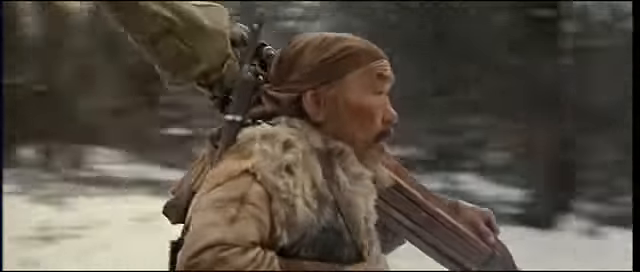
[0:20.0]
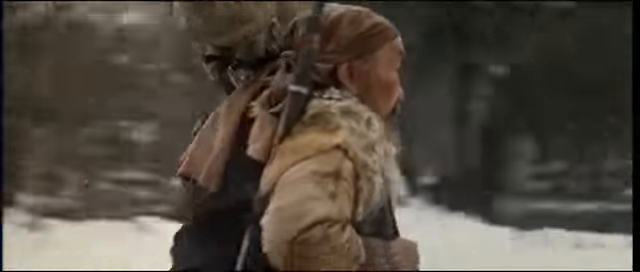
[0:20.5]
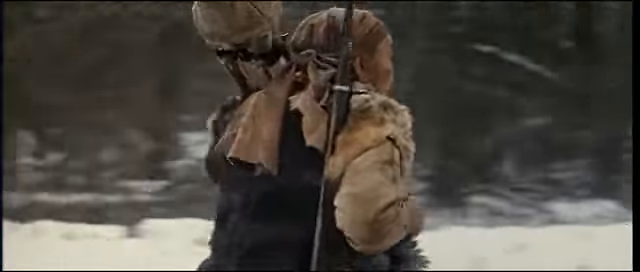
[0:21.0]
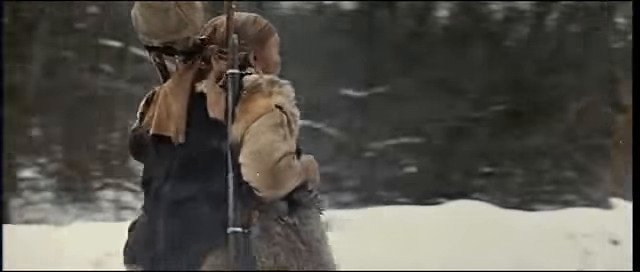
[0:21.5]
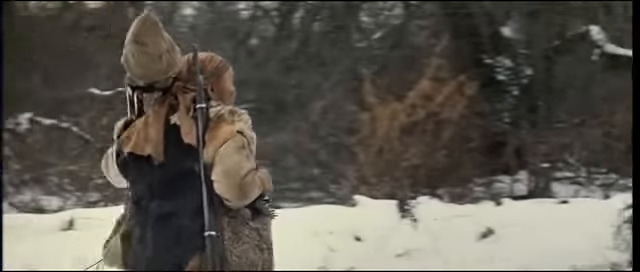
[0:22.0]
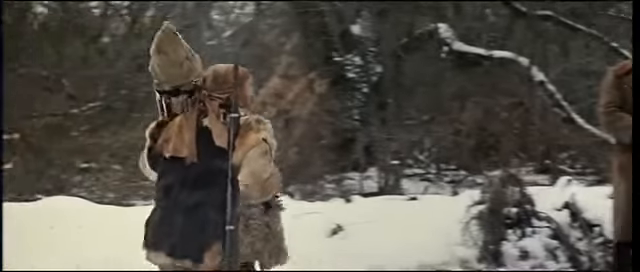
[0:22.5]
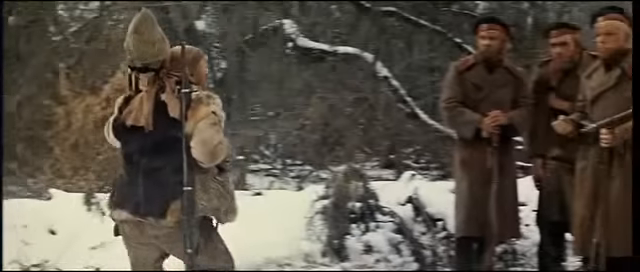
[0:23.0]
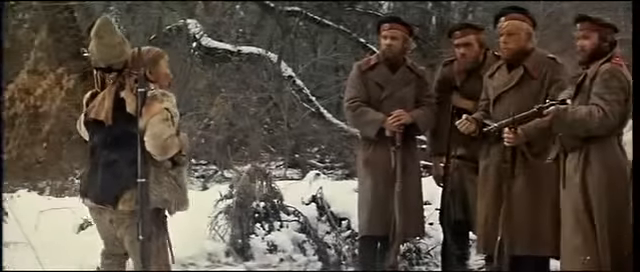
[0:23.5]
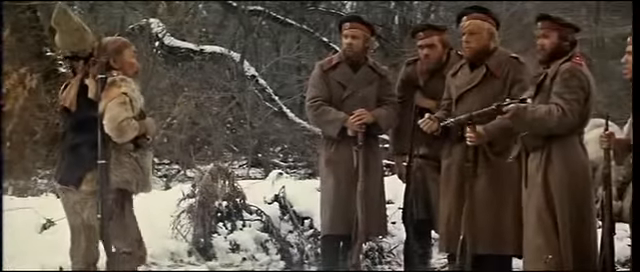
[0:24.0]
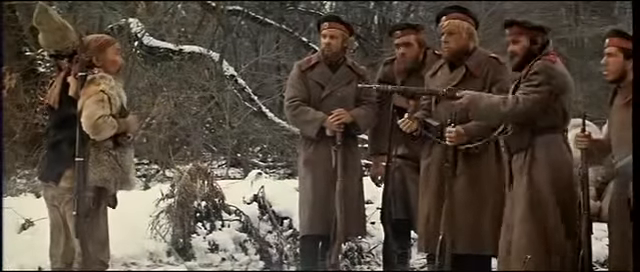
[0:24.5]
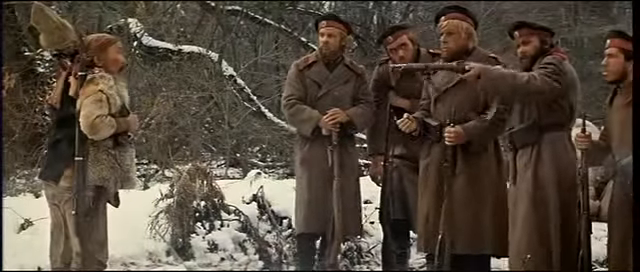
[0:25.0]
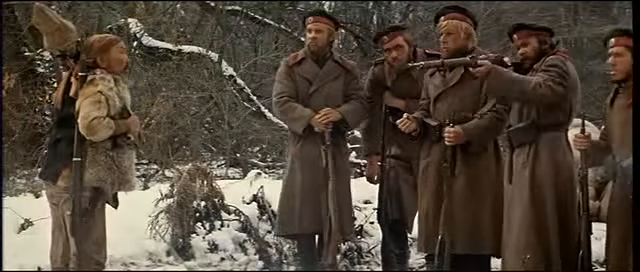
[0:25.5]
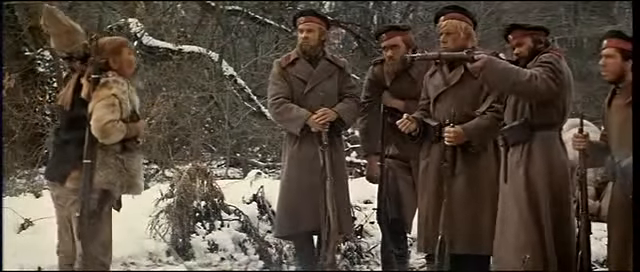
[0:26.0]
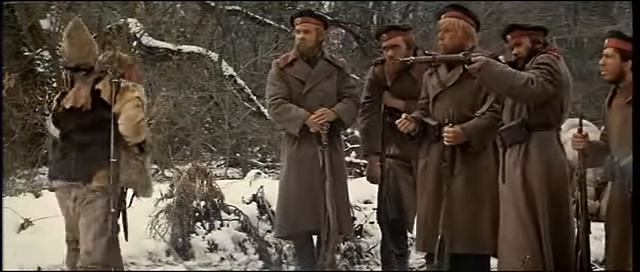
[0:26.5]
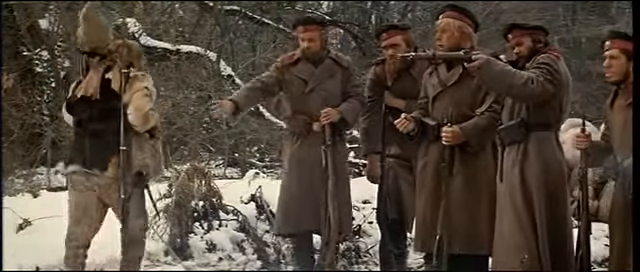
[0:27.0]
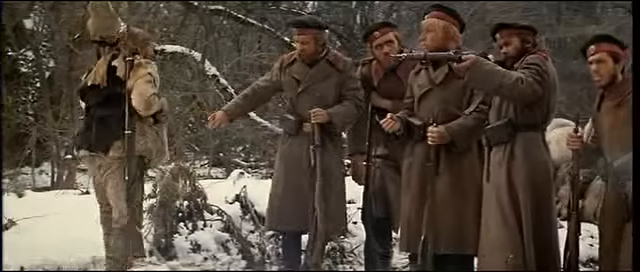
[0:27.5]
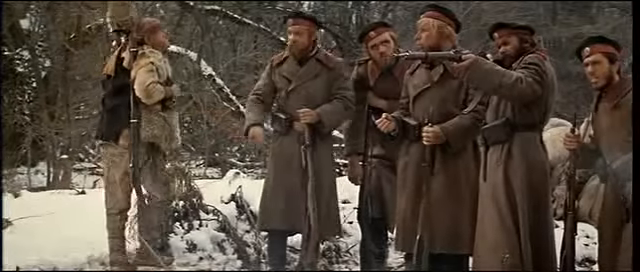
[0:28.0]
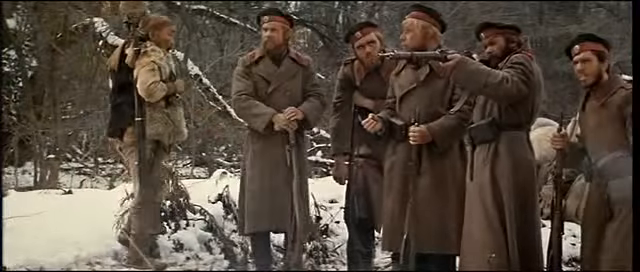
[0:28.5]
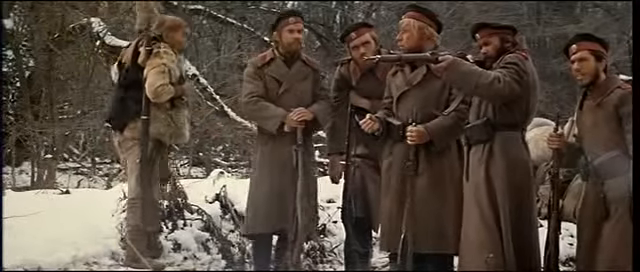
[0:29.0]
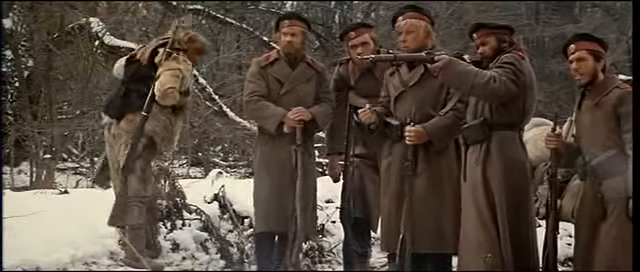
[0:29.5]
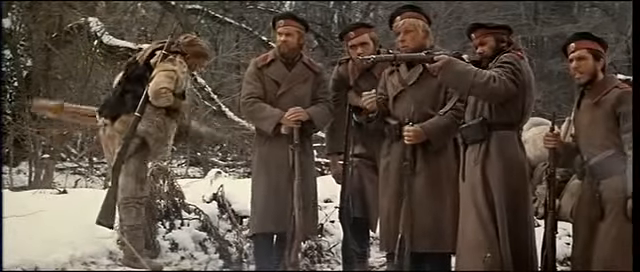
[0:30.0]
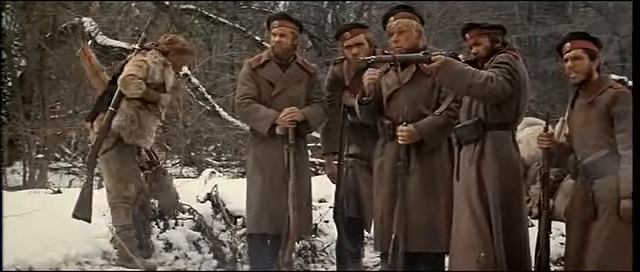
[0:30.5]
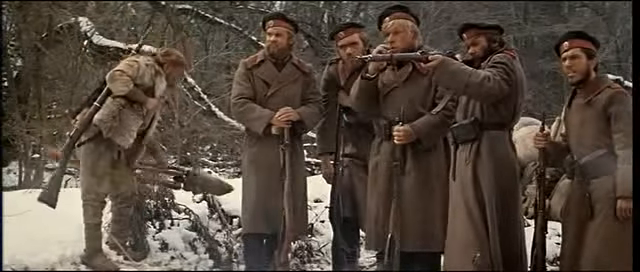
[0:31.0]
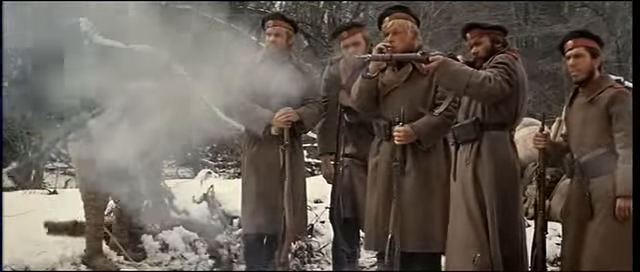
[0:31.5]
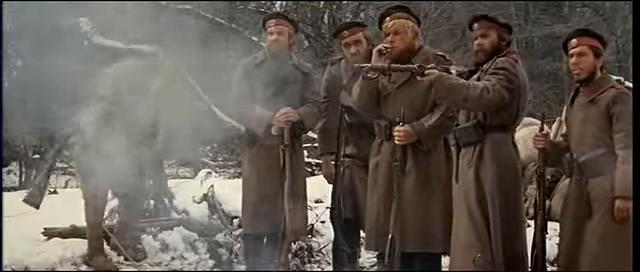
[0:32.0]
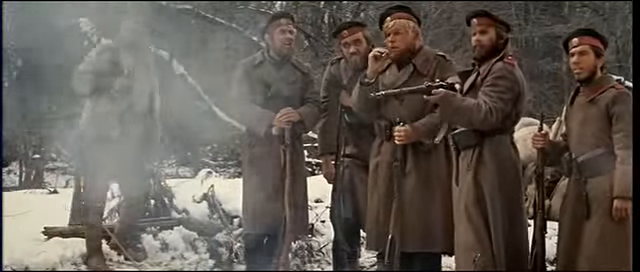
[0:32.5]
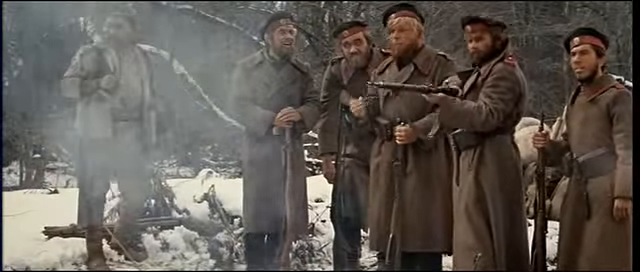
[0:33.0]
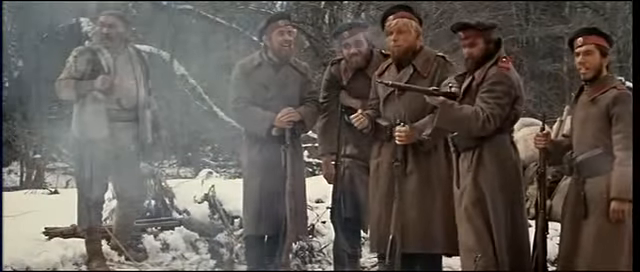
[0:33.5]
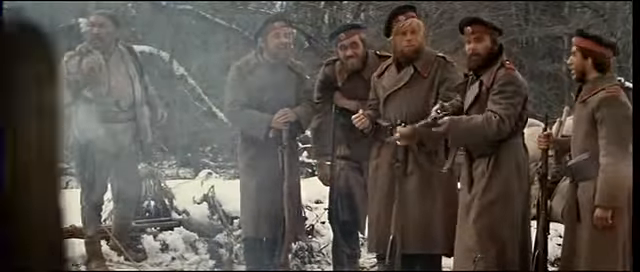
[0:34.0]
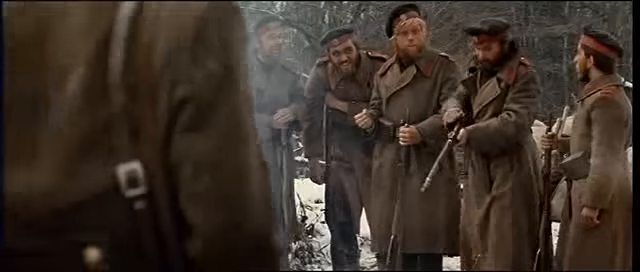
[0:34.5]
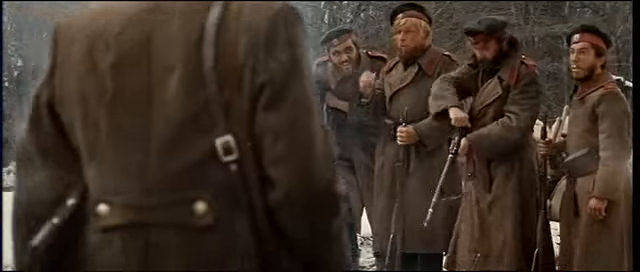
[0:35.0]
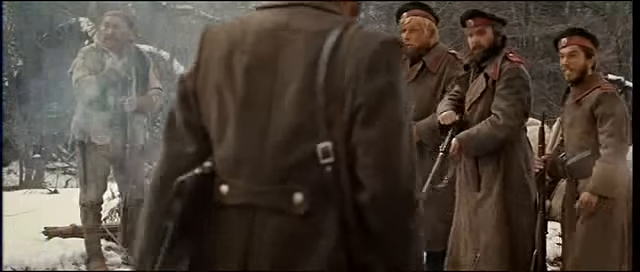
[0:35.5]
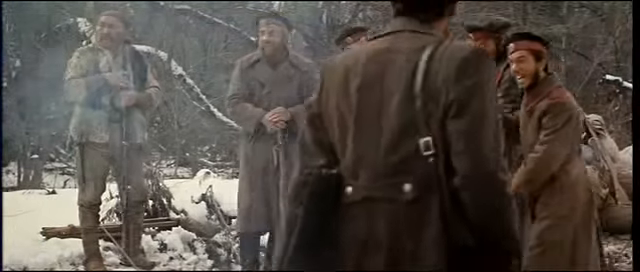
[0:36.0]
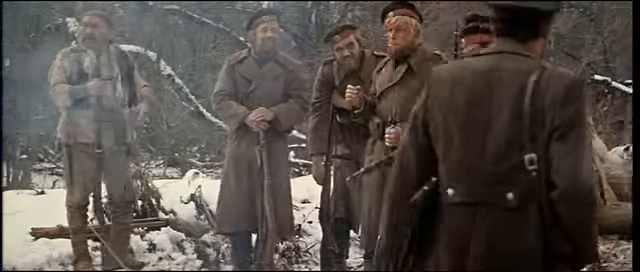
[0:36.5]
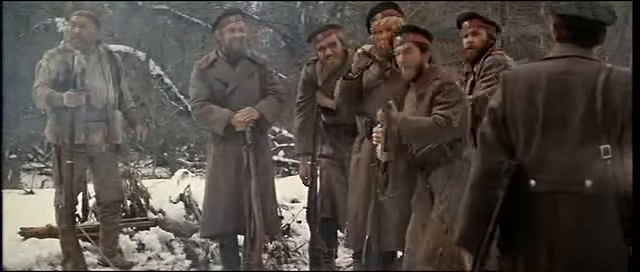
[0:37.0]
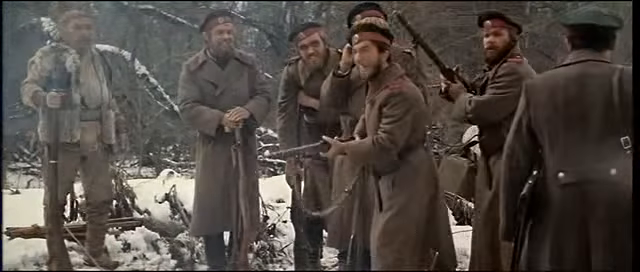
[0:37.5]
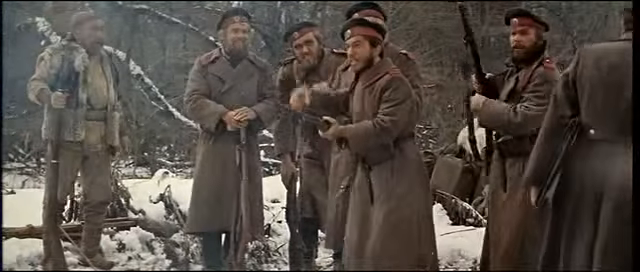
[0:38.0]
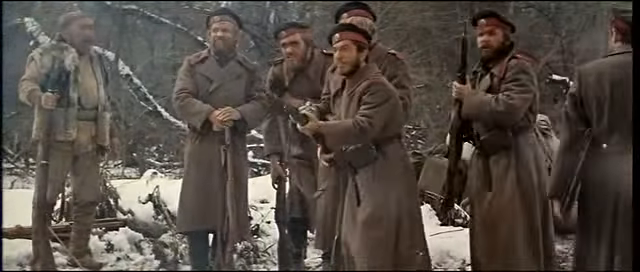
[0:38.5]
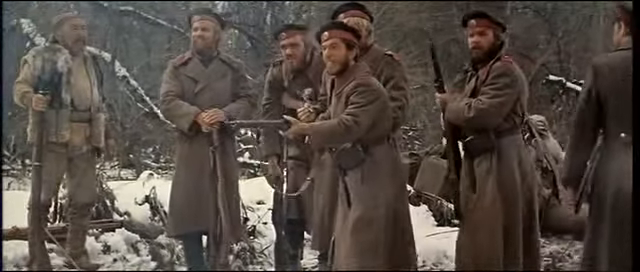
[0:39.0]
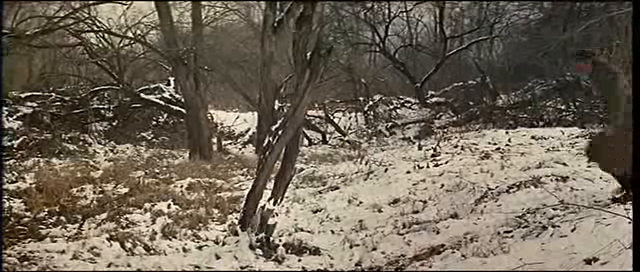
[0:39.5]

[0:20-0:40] The Asian man keeps running to the right. He appears to have some sort of weapon on his back, and the wood and this weapon are all he is carrying. He runs toward four other people wearing the same uniform as the man who came with him, a long brown coat. They all have guns and are lined up facing the Asian man, and the fourth one in the line points his gun toward him. They all have brown hair and brown beards except the middle one, who has blonde hair, and they all wear hats. The Asian man then moves off to the left while the men stay lined up, a bit separated. The man who had the weapon then shoots the man who came with the Asian man, then goes to join the other men dressed like him. Another scene then shows one of the uniformed men running.